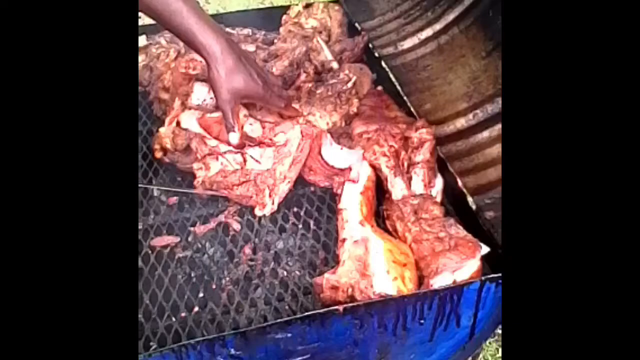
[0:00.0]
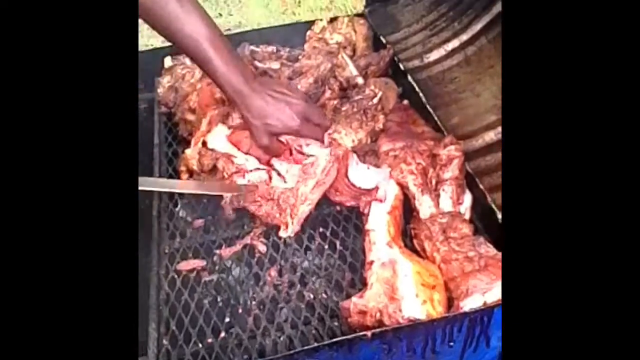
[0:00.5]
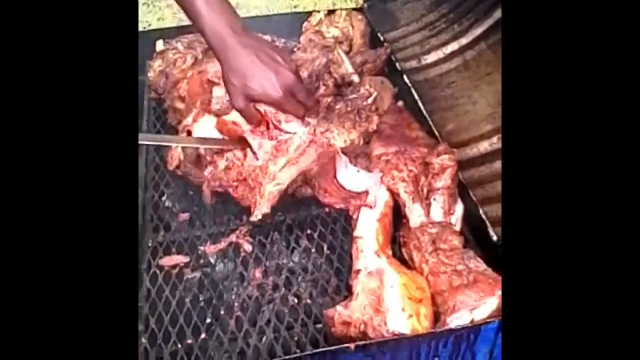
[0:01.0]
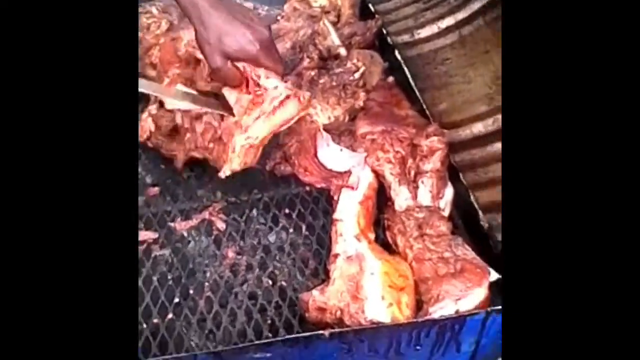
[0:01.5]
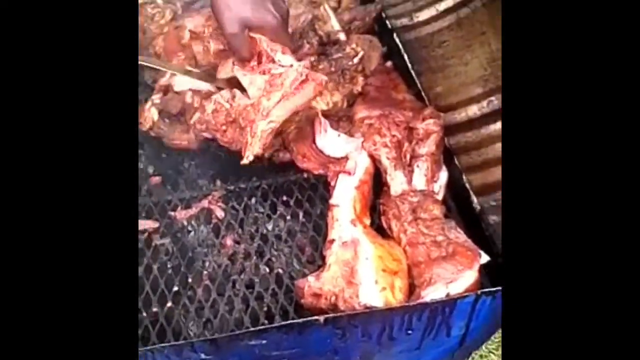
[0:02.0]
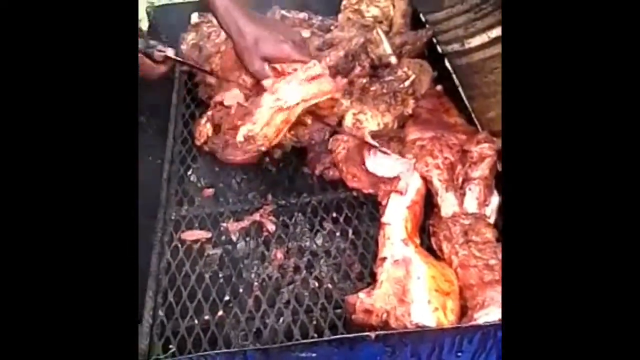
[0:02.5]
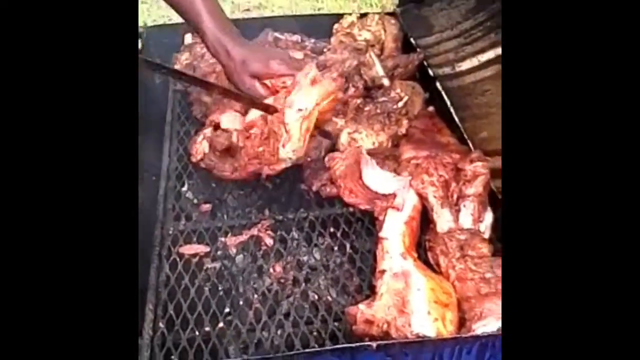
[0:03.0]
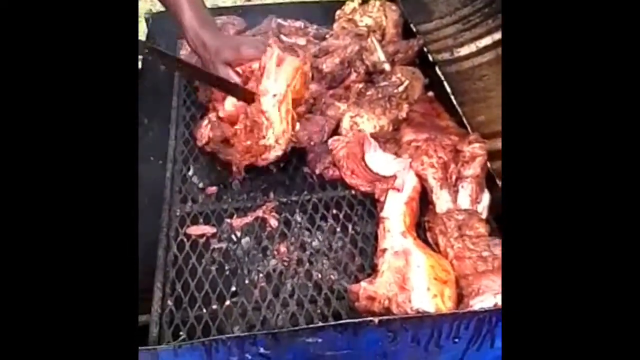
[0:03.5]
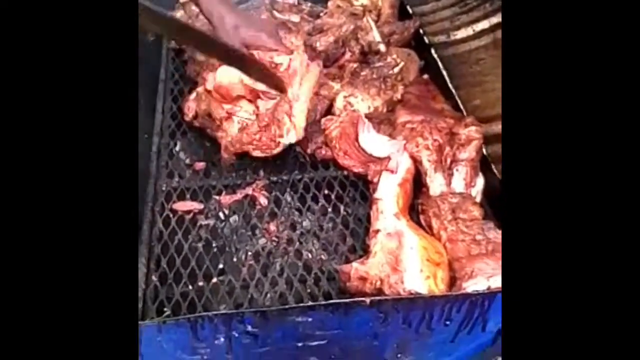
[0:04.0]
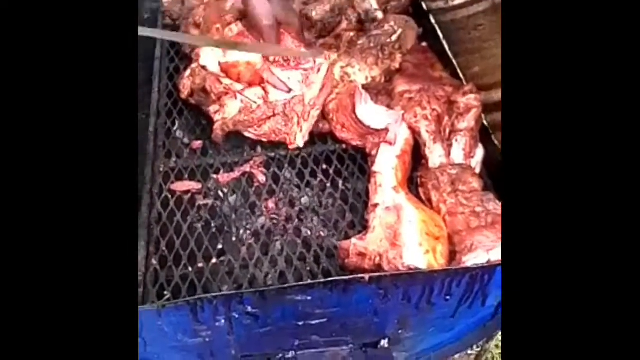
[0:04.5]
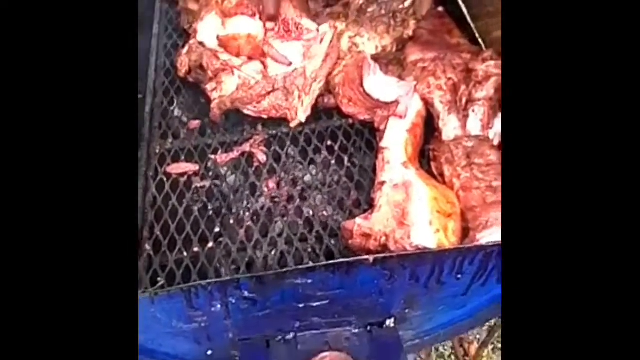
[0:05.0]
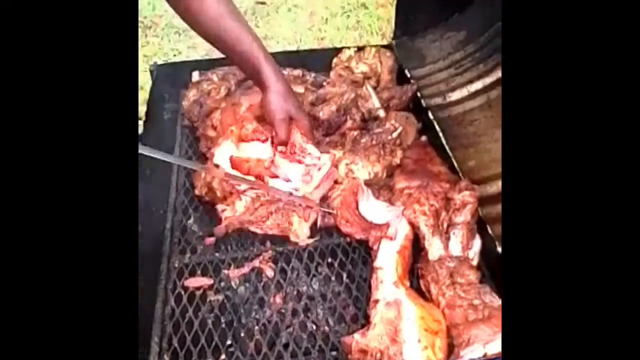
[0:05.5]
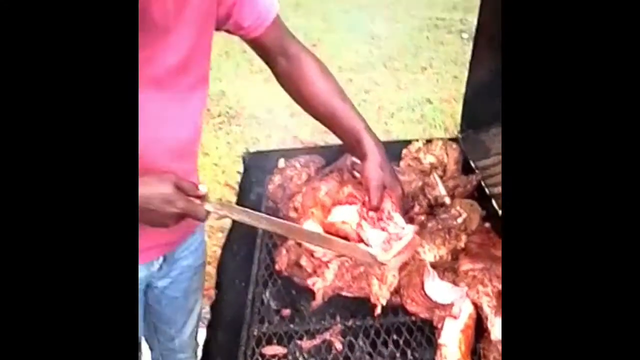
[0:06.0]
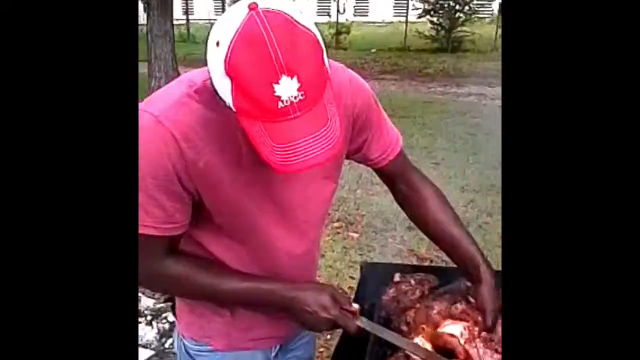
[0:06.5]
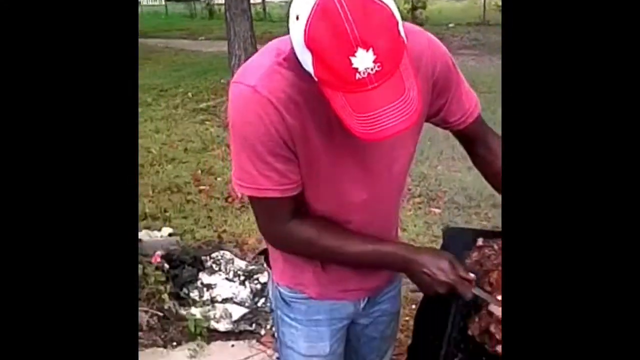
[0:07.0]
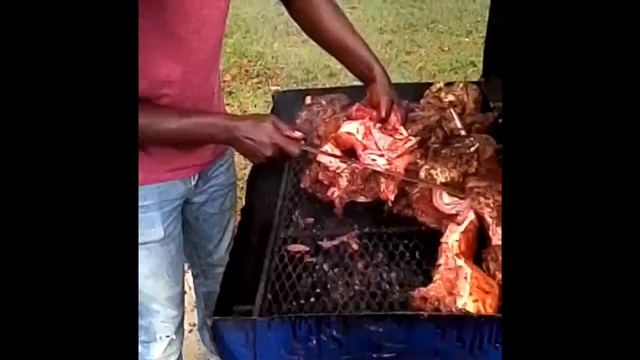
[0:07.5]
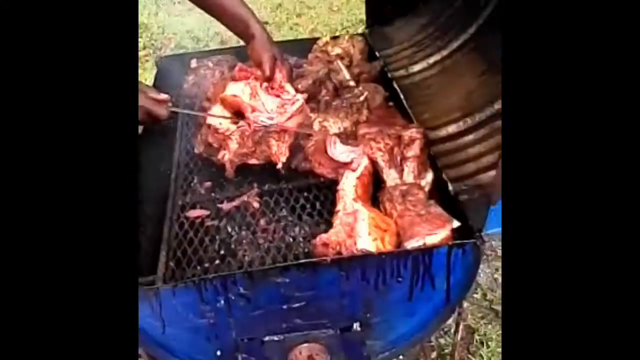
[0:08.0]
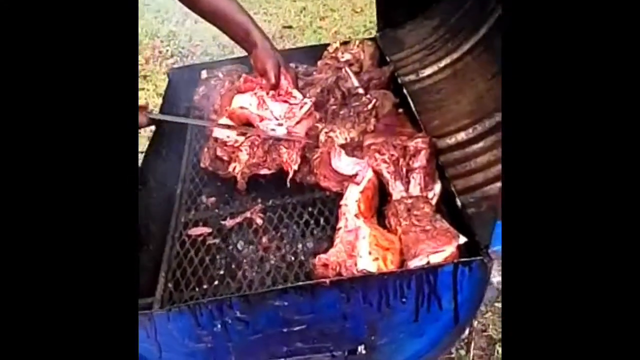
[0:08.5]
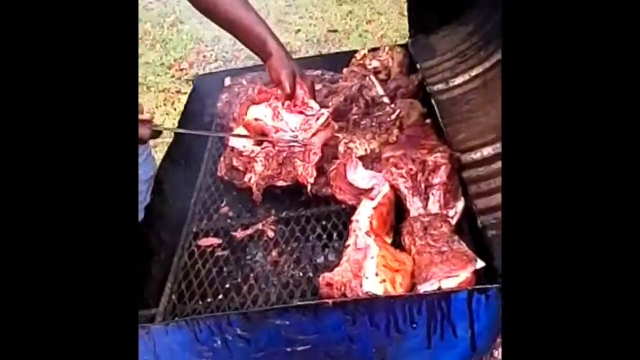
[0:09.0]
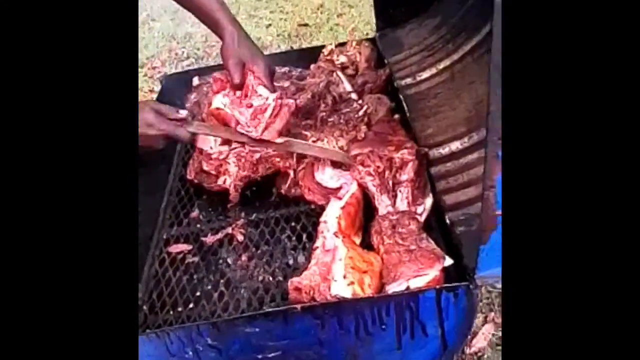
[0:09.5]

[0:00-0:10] Someone works on some kind of meat with what looks like a butcher knife; an arm is visible, with the left hand holding and prodding through the meat. It appears to be a bunch of different ribs, six or seven pieces, on what looks like an open grill, with black lattices where the meat sits. On the right is the lid, which looks like curved metal pieces with ridges in it. The camera moves around as he slices, rotating a little. For a moment the view turns to him: he wears a red and reddish-pink hat with white writing on it, a red shirt and blue jeans, and stands in front of the grill. Grass is visible behind him. There is blue on the sides as well, with darker trails running down the edges, which look like some kind of stain or more like butter or something. He appears to slice off a little piece, holding it with his left hand and slicing with his right.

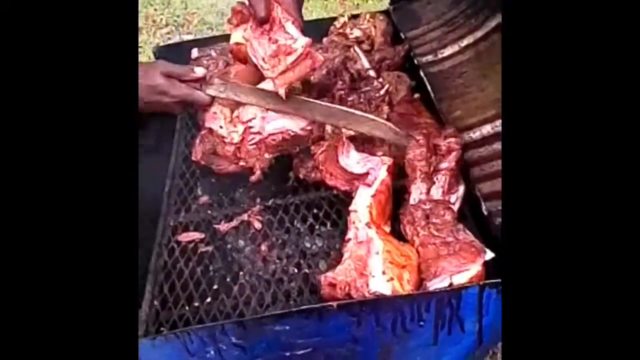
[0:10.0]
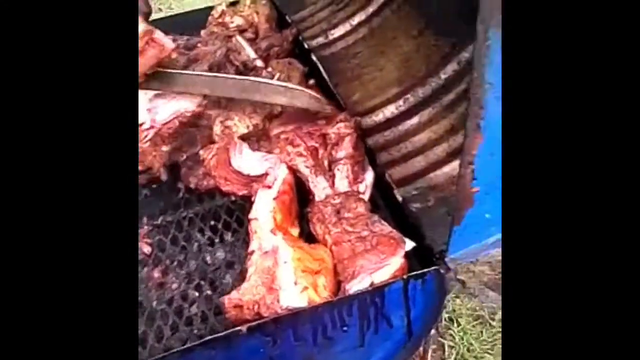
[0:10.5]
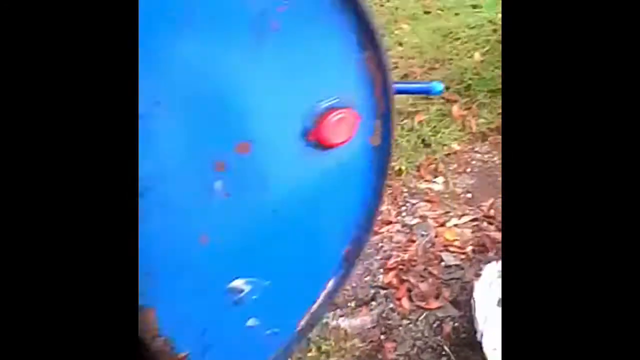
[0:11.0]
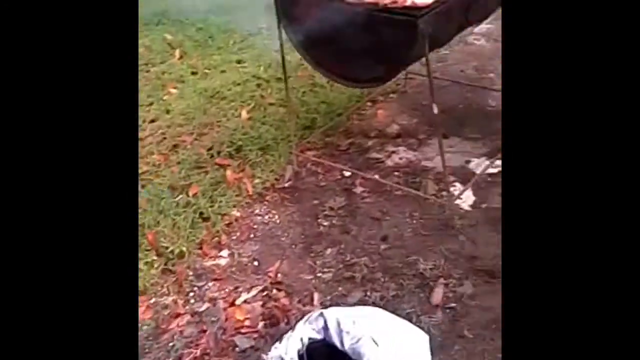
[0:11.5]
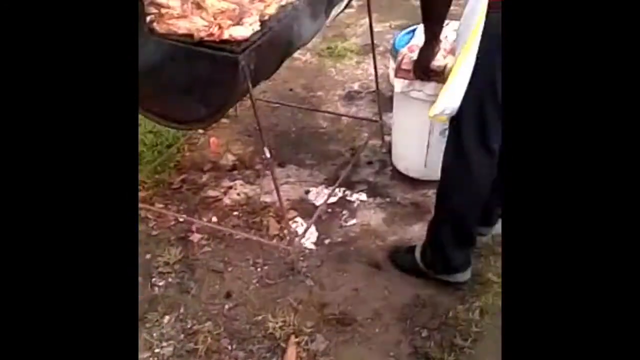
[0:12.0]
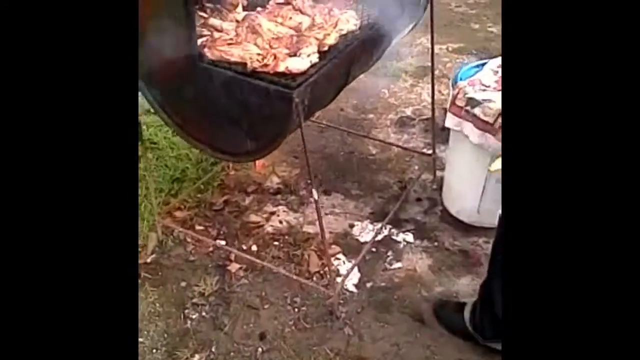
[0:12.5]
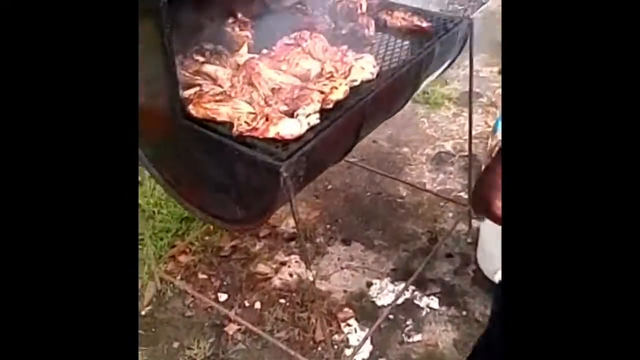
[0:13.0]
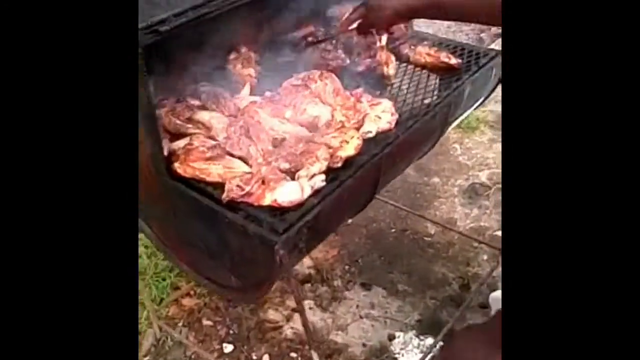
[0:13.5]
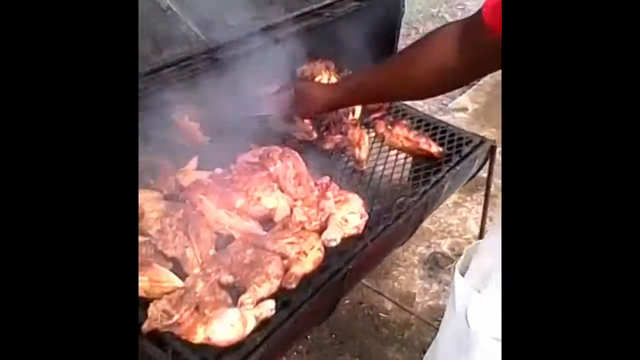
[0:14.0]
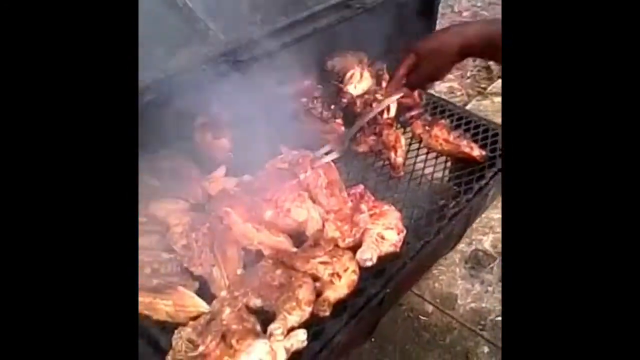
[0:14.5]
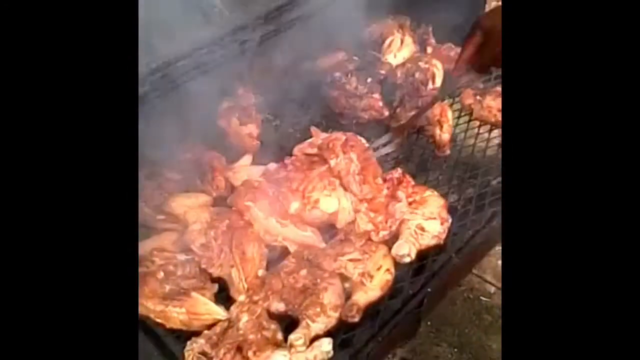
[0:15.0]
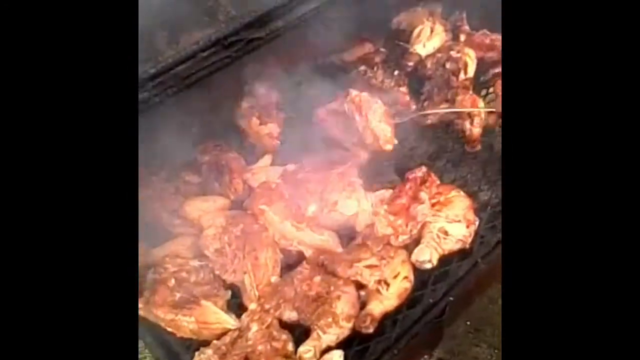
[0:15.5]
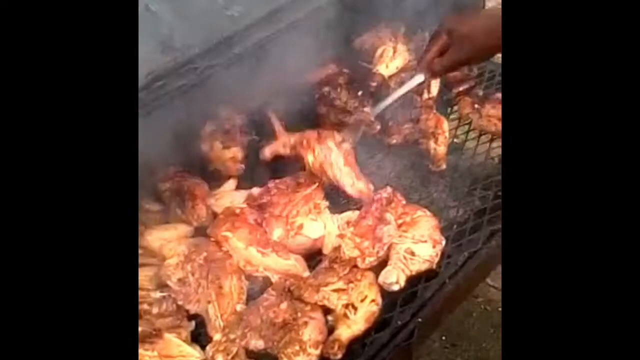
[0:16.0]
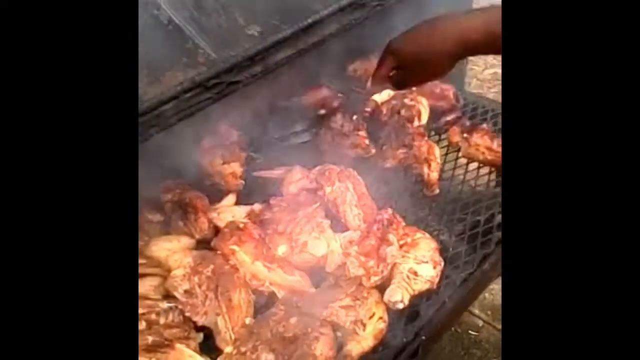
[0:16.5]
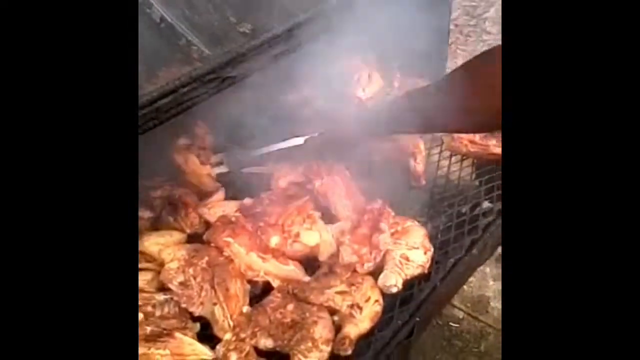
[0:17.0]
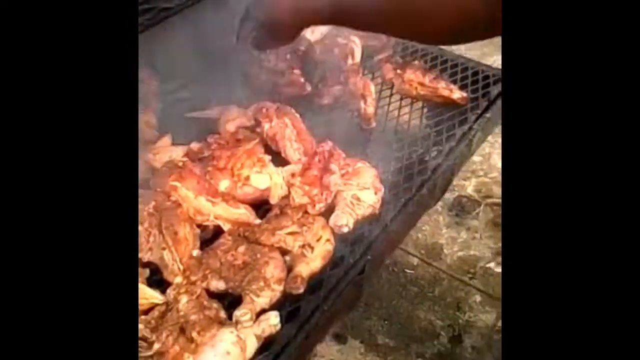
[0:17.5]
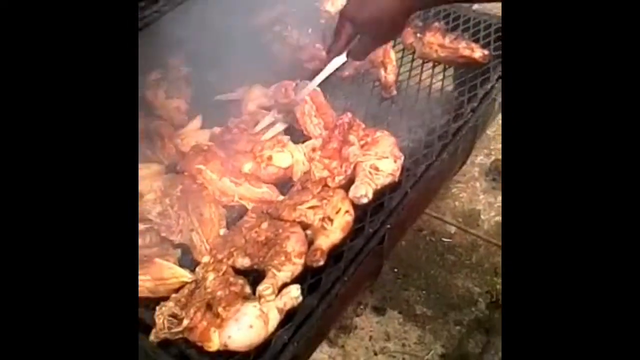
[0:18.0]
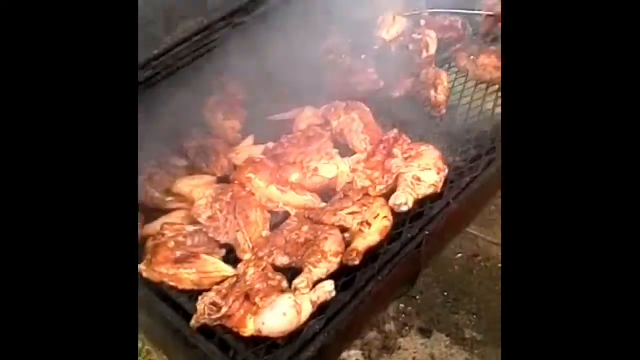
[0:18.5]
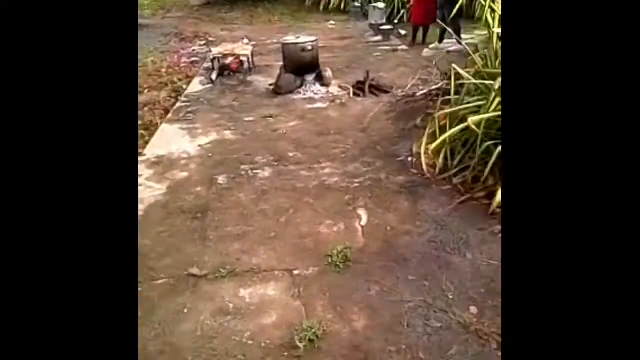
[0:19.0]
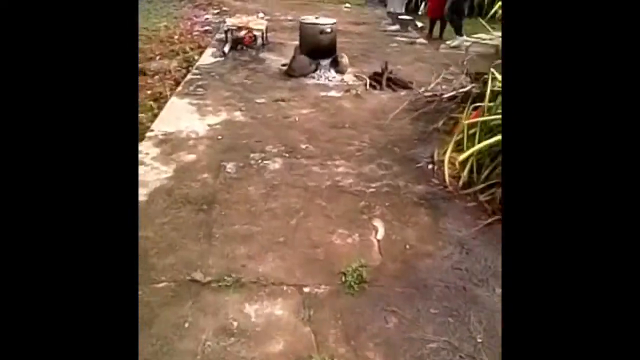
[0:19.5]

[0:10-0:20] The scene moves from the first man grilling to another man, who stands in front with meat in a package in front of his grill. The grill stands on some kind of rebar coming from each corner, two in the front and two in the back, and at the bottom a square-looking platform connects all the rebar. Piles of meat are on the left, and he seems to be keeping them warm while picking up a couple of pieces from the top and moving them to the right. He uses some kind of long prong that looks like a fork with just two metal pieces coming out of it, rotating the meat a little.